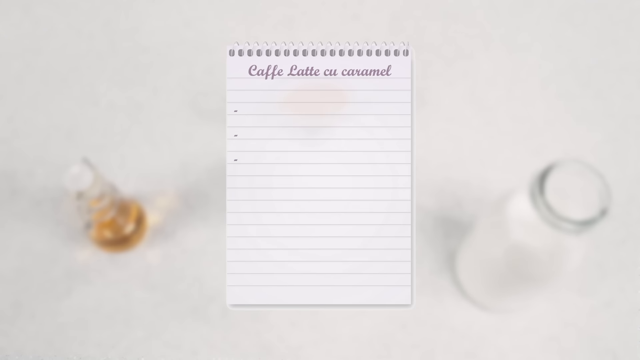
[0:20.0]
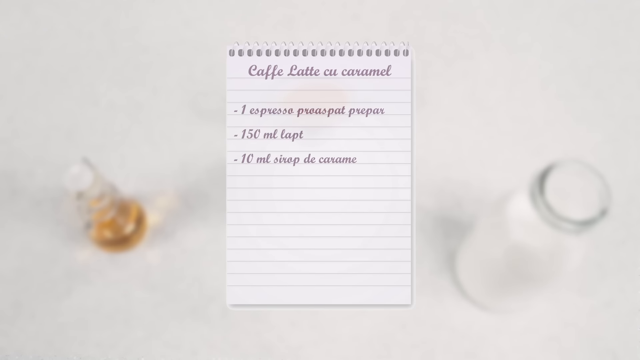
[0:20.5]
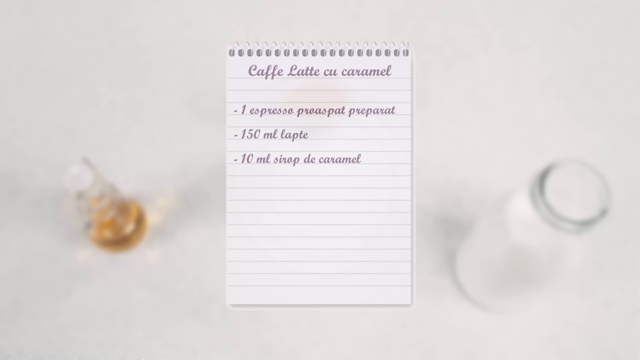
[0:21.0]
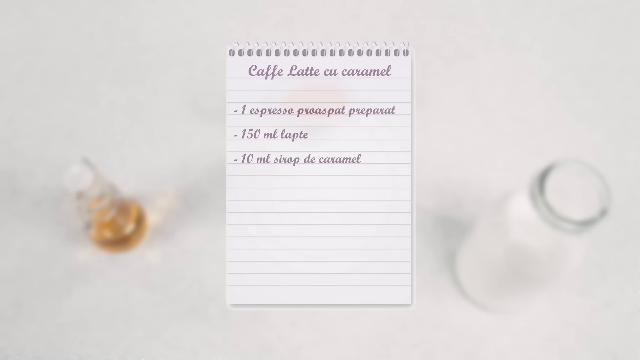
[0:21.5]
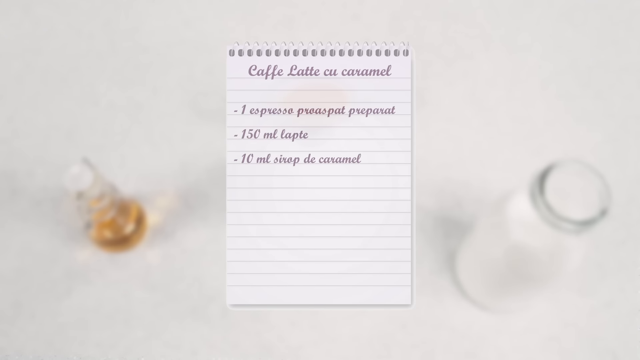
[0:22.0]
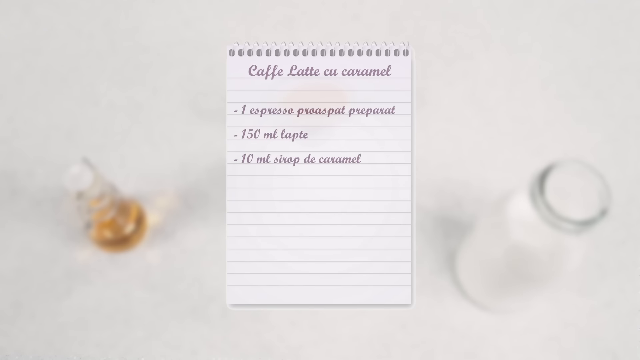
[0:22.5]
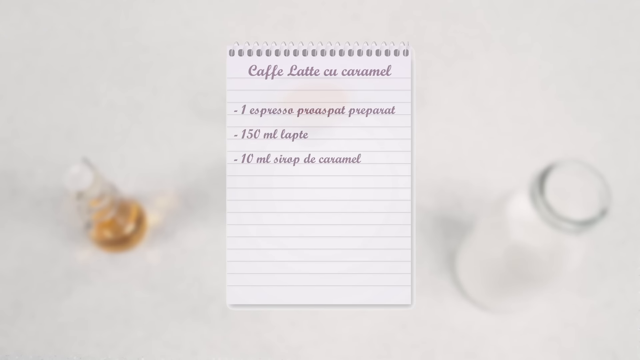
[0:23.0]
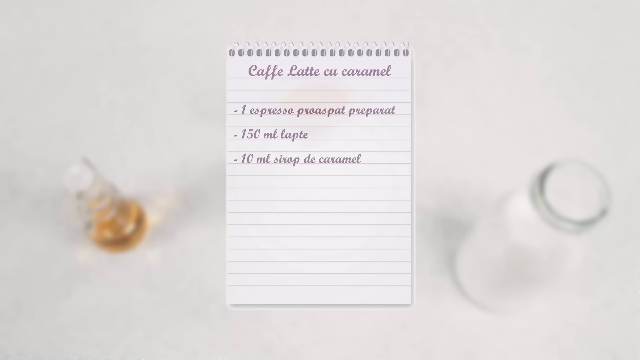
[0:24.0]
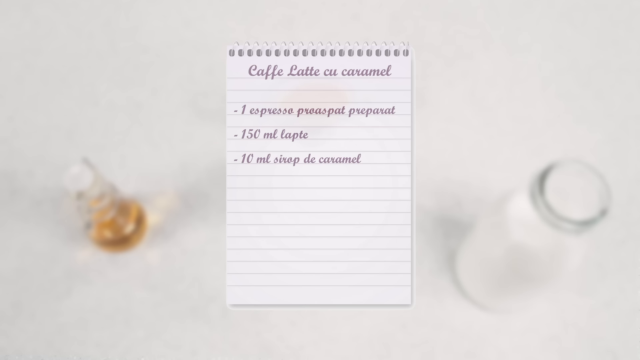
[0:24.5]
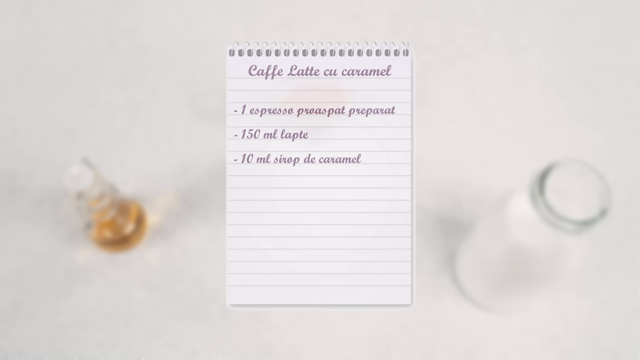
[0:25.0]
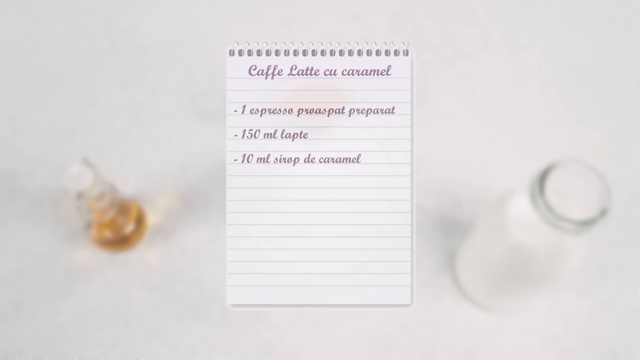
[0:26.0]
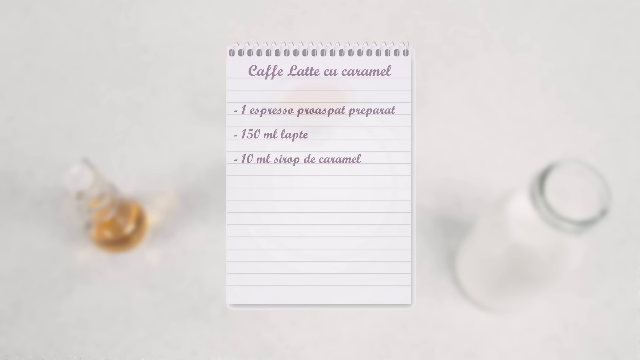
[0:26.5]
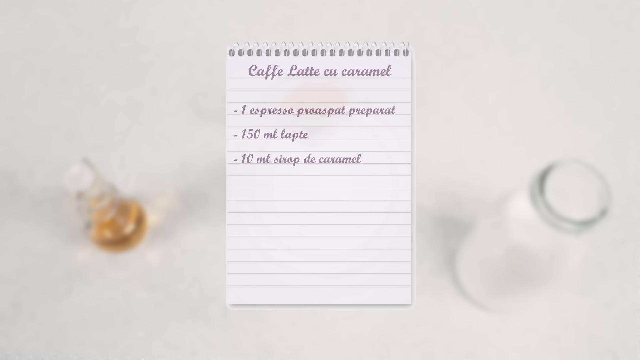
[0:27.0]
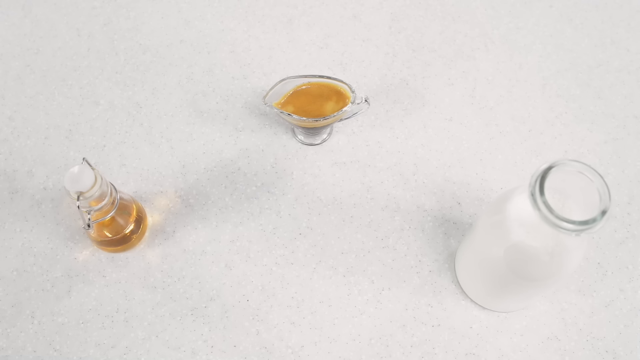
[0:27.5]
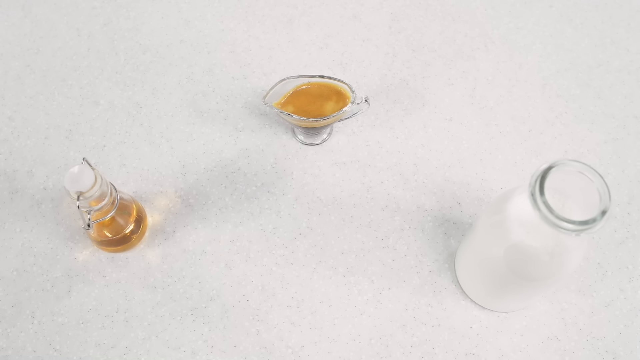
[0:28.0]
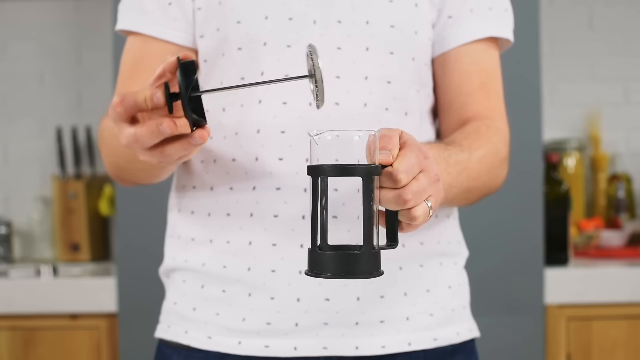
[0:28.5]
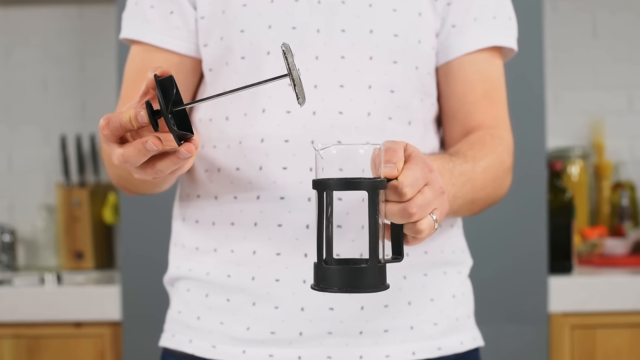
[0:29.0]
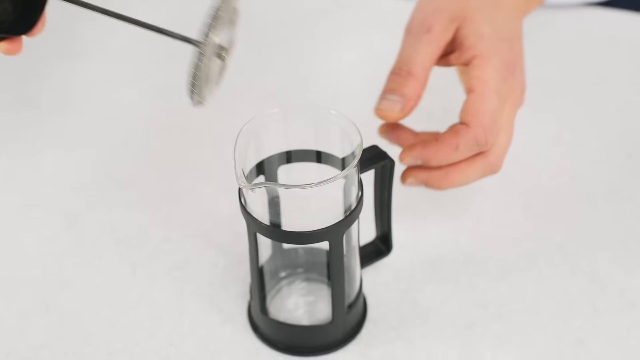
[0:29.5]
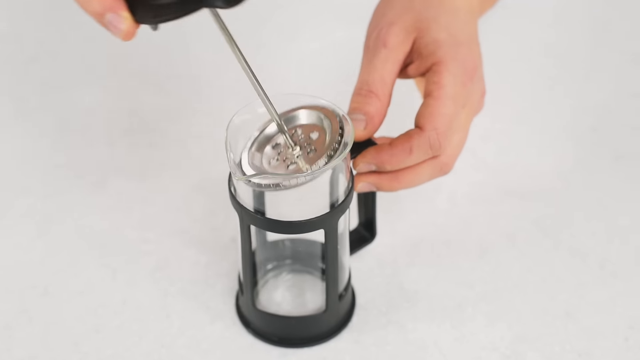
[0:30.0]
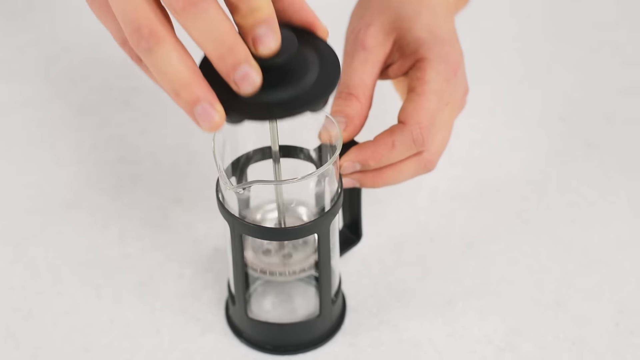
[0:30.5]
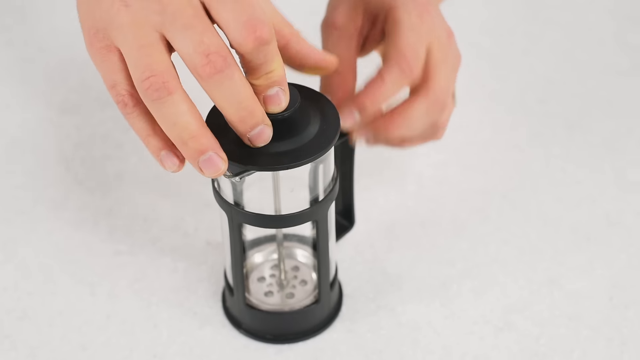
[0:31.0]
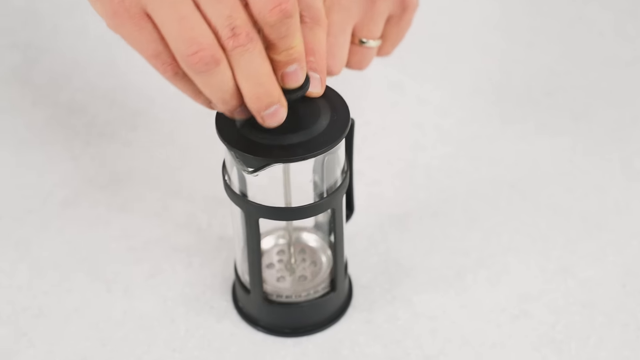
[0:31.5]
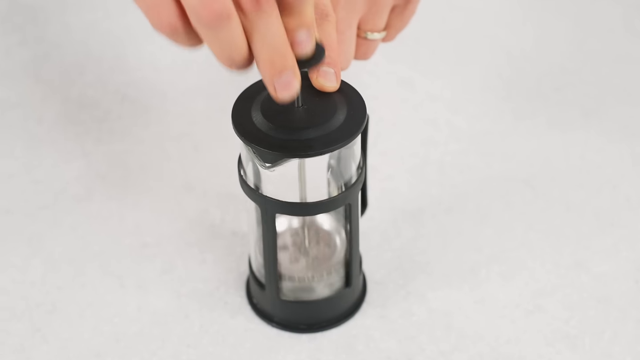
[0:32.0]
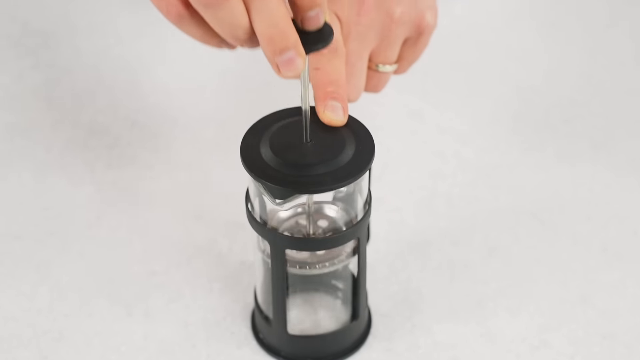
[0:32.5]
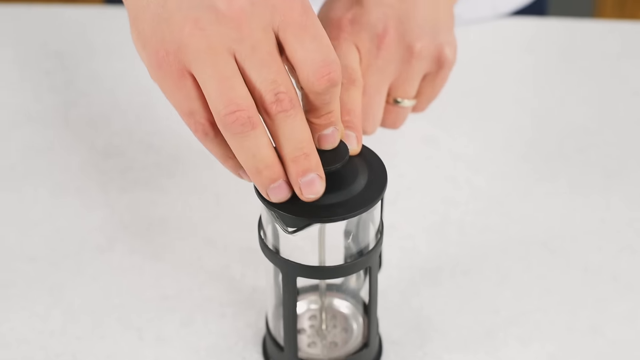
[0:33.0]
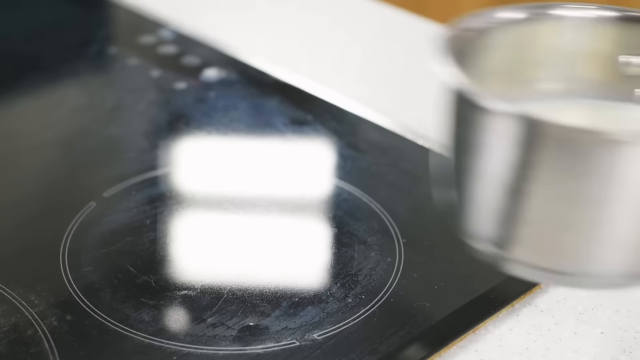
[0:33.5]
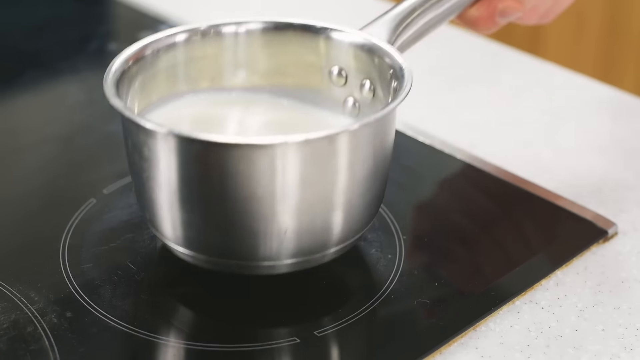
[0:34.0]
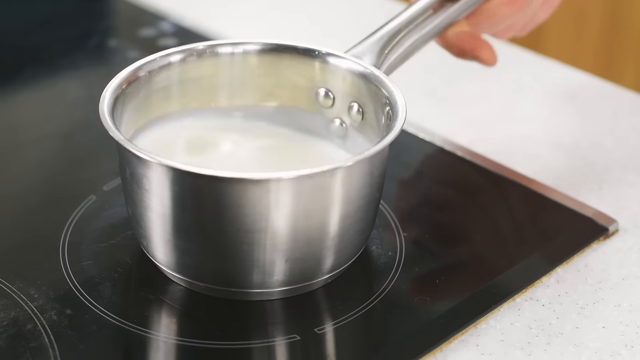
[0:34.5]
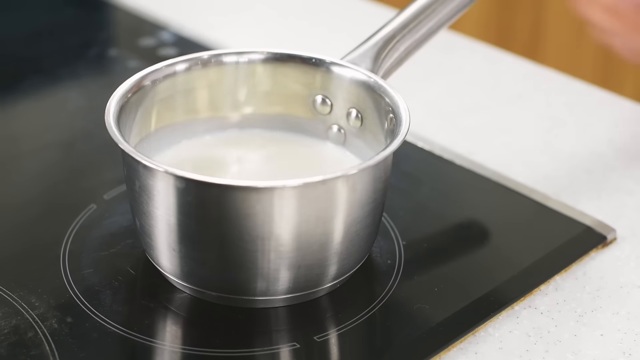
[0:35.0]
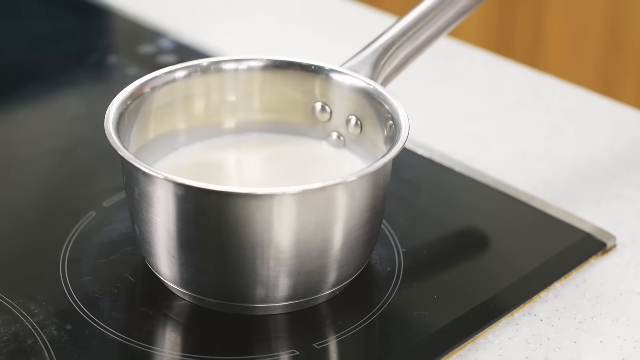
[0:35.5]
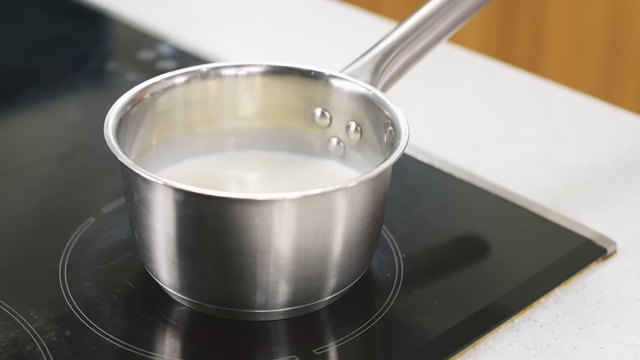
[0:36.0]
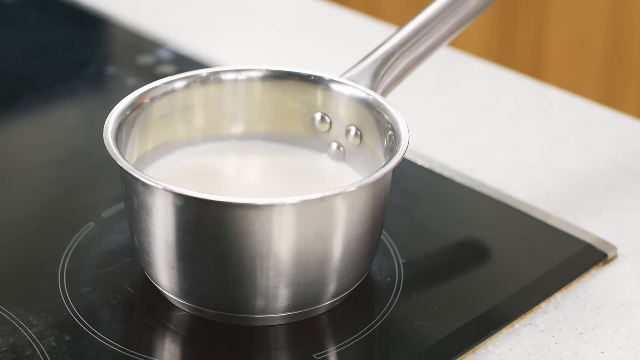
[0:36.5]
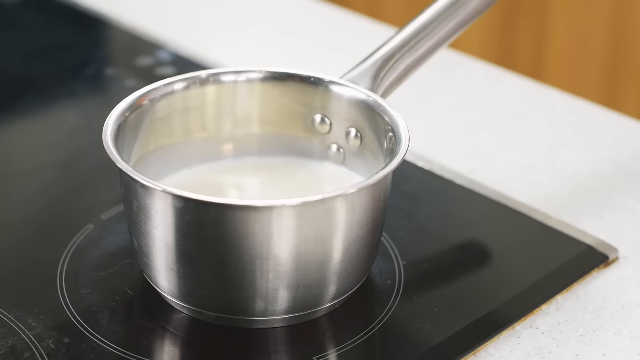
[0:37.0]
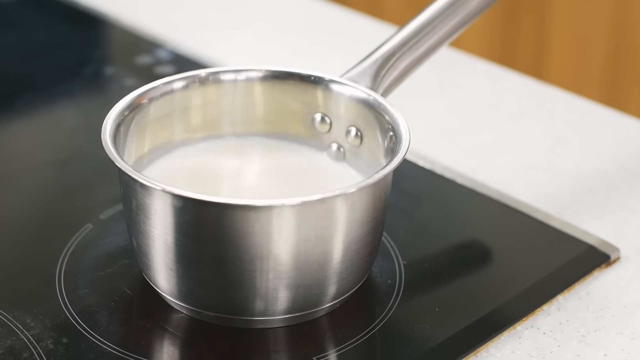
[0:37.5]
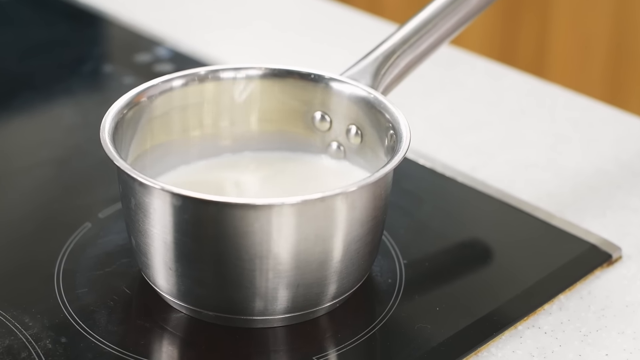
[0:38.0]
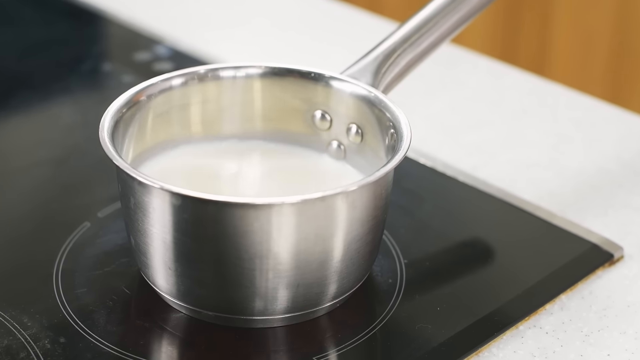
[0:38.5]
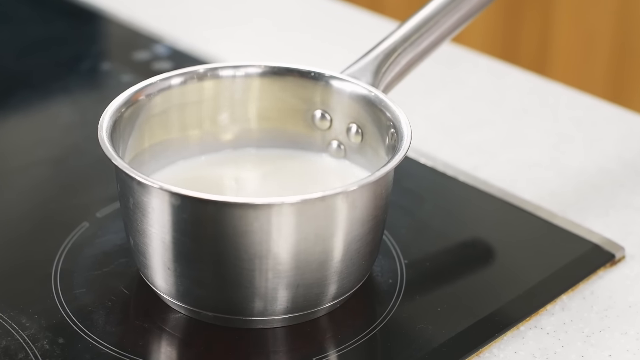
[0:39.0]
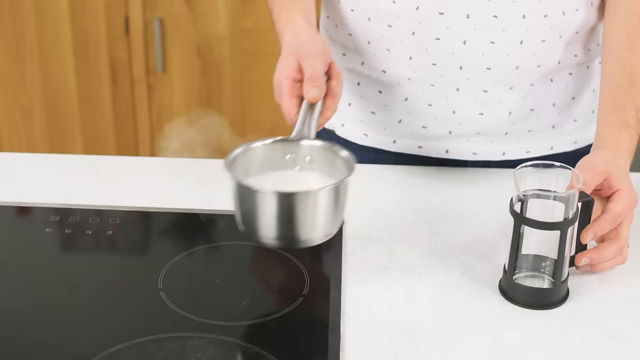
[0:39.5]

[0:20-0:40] A graphic that looks like a notepad appears, with "Café Latte cu Caramel" at the top of the page in what looks like script. Ingredients appear on the lines of the notepad: "one espresso proaspat preparat", "150 ml lapte", and "10 ml sirop de caramel", written in French. Next comes a close-up of a man's hands: he holds a frothing pitcher in his left hand and a milk frother in his right, inserts the frother into the pitcher and pumps the top up and down several times. A stainless steel pot filled with milk is then placed on a black stovetop. The man's hand then briefly appears pouring the milk from the stainless steel pot into the frothing pitcher.